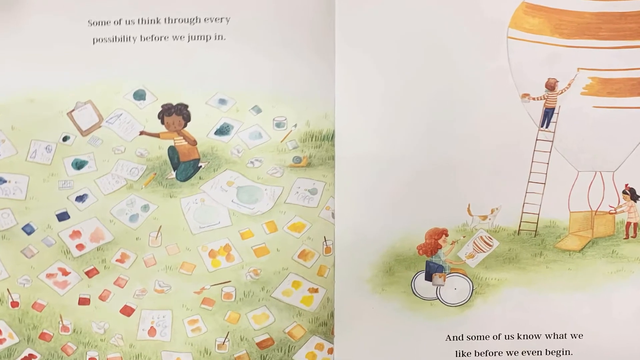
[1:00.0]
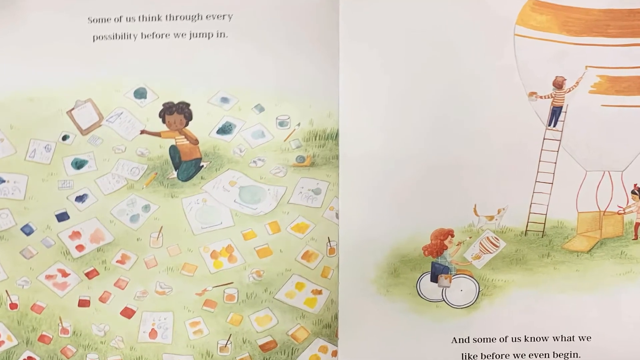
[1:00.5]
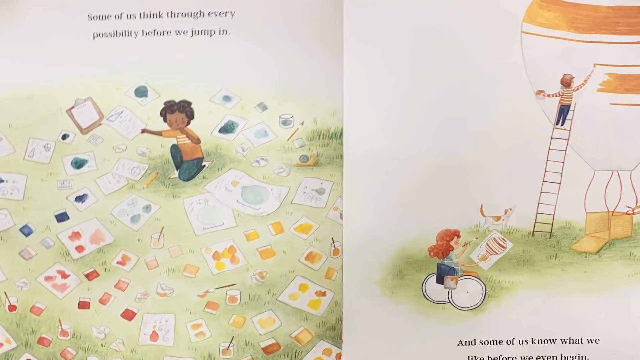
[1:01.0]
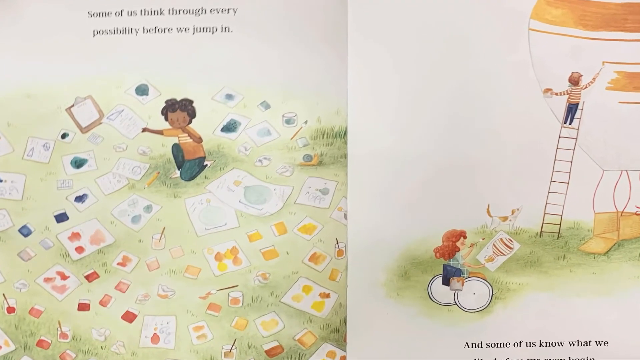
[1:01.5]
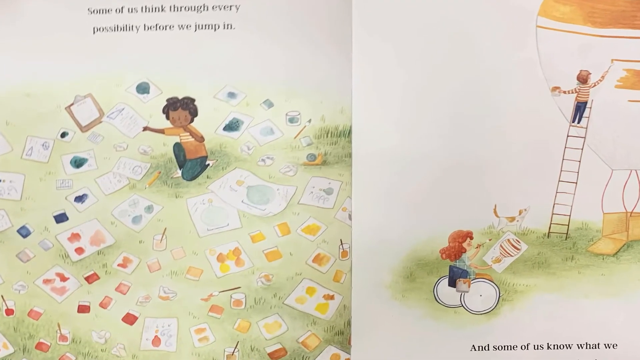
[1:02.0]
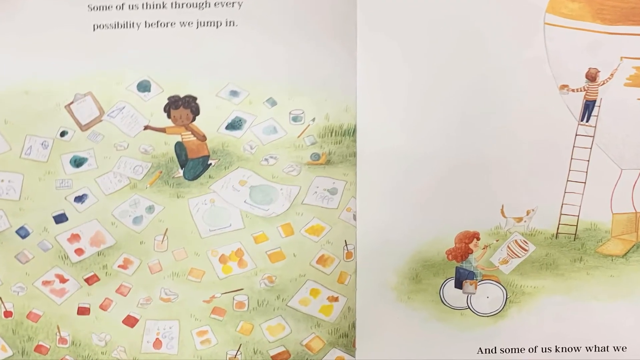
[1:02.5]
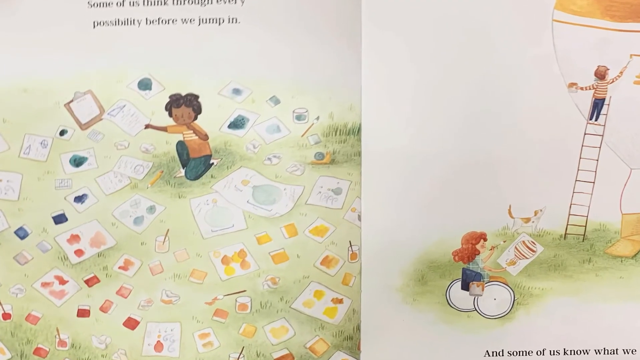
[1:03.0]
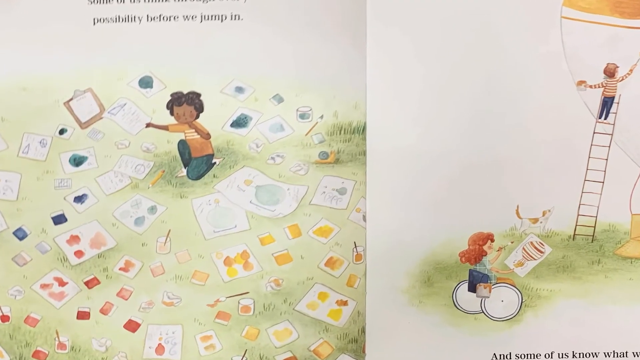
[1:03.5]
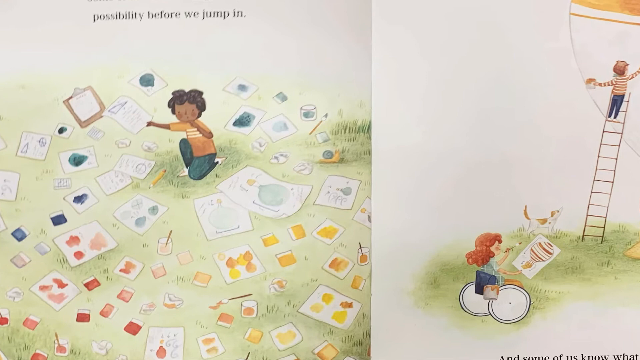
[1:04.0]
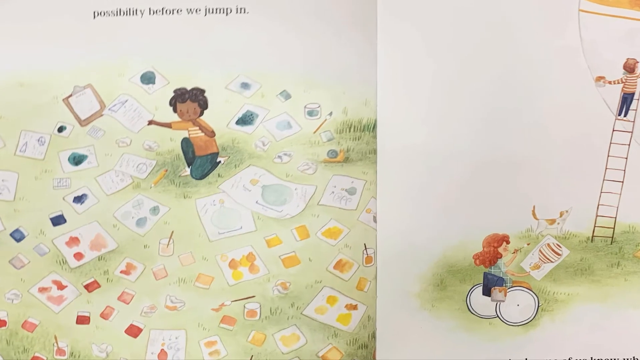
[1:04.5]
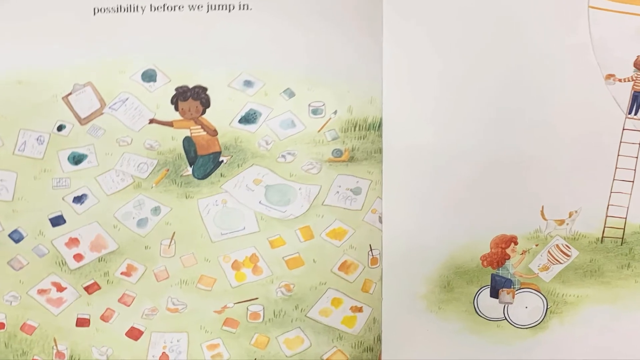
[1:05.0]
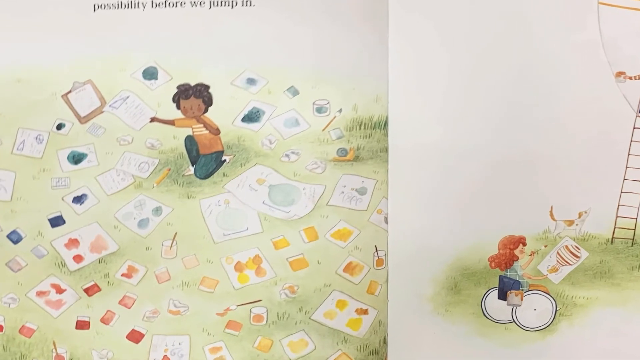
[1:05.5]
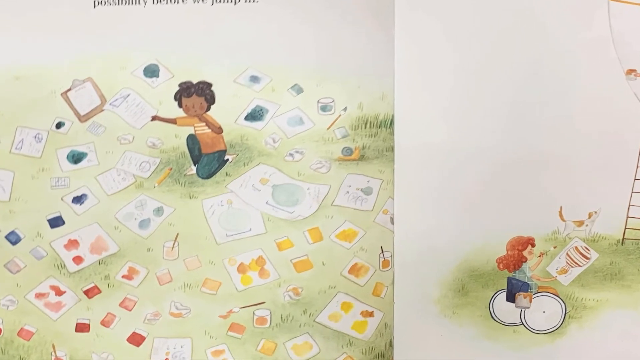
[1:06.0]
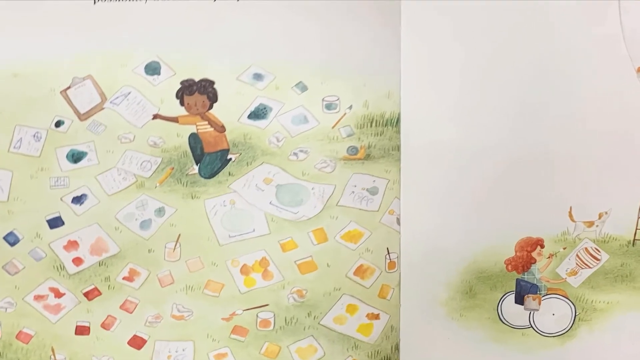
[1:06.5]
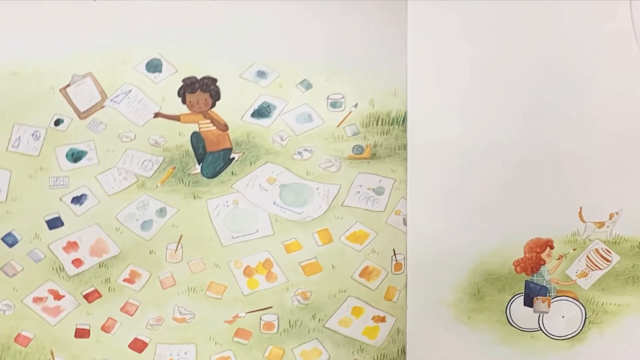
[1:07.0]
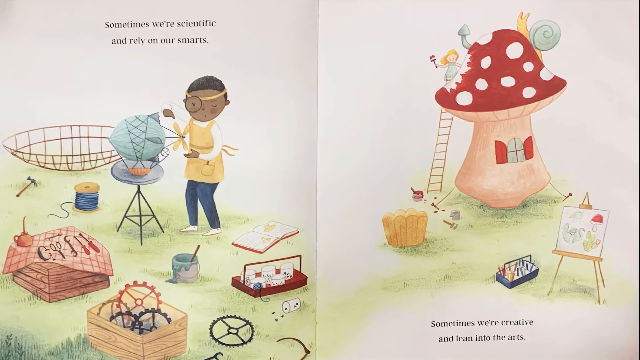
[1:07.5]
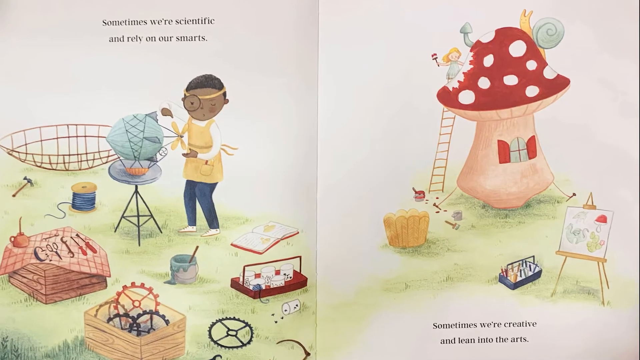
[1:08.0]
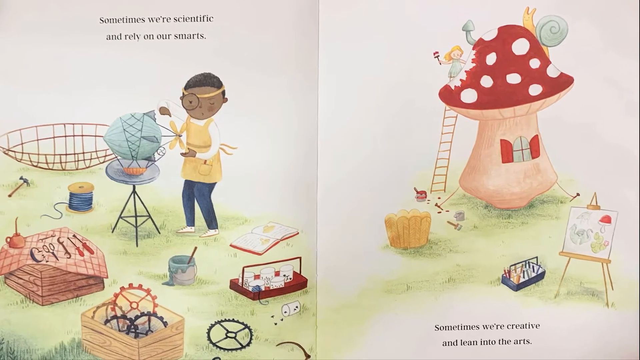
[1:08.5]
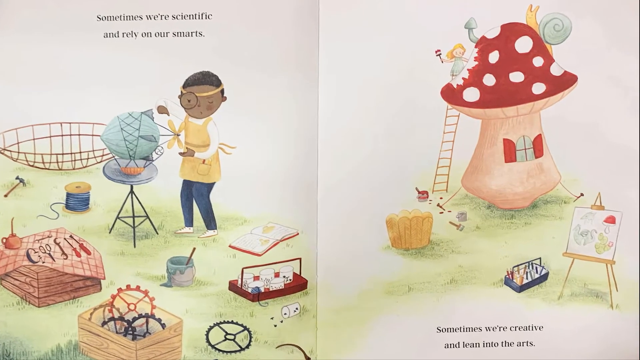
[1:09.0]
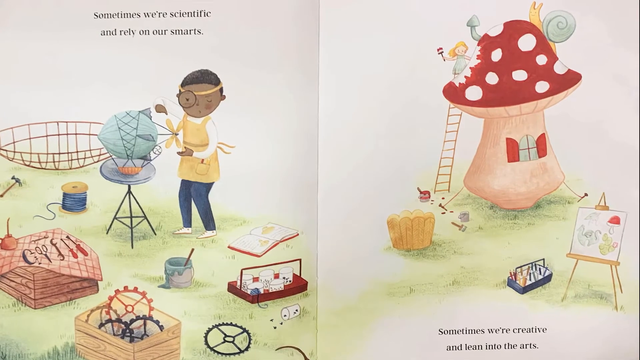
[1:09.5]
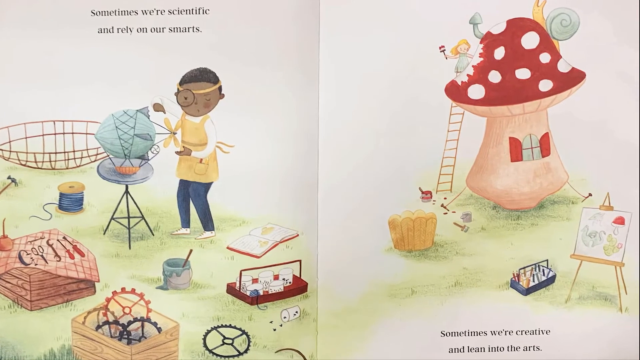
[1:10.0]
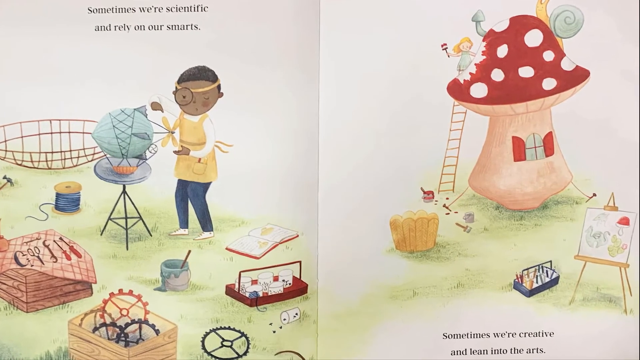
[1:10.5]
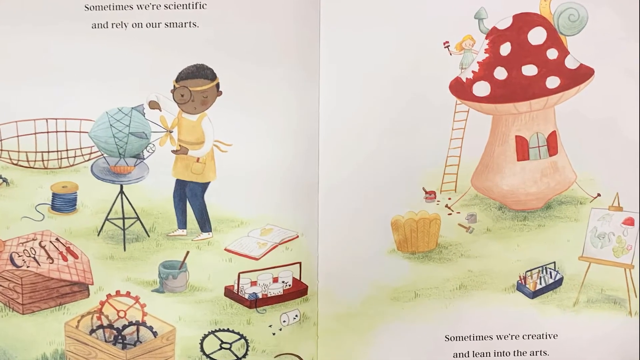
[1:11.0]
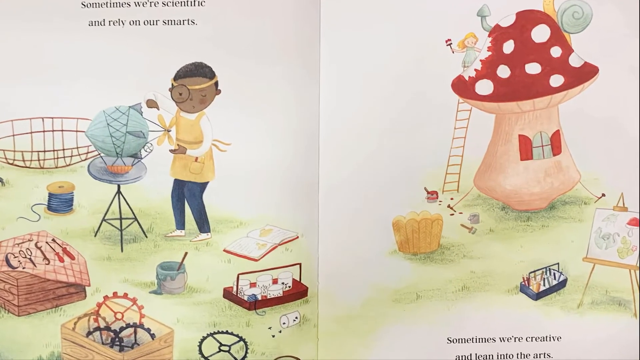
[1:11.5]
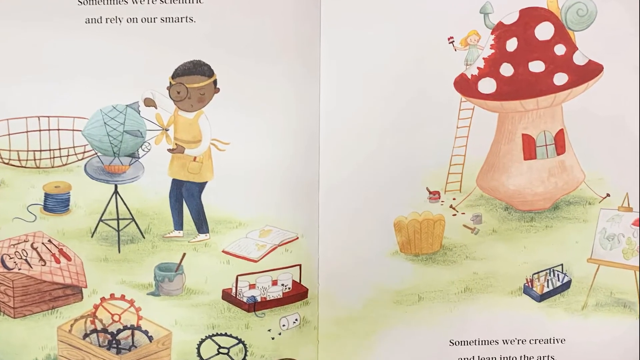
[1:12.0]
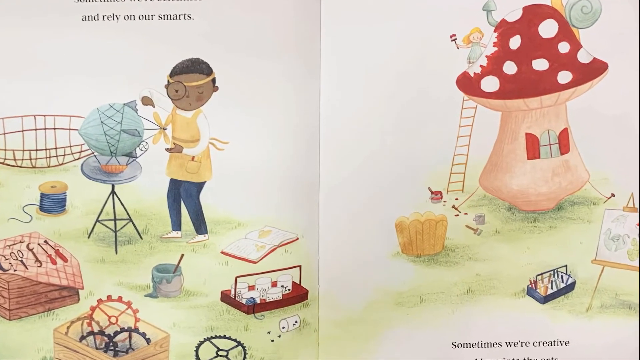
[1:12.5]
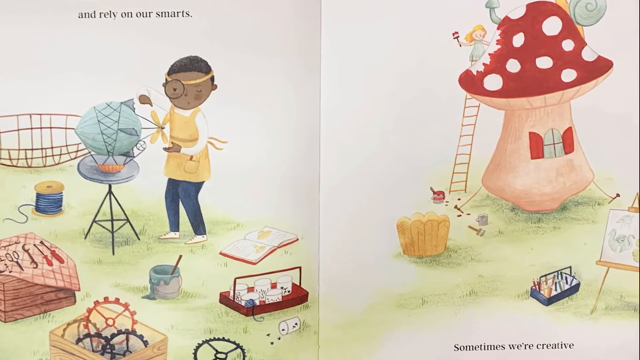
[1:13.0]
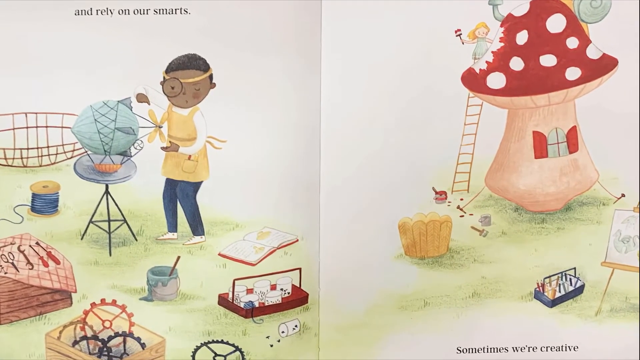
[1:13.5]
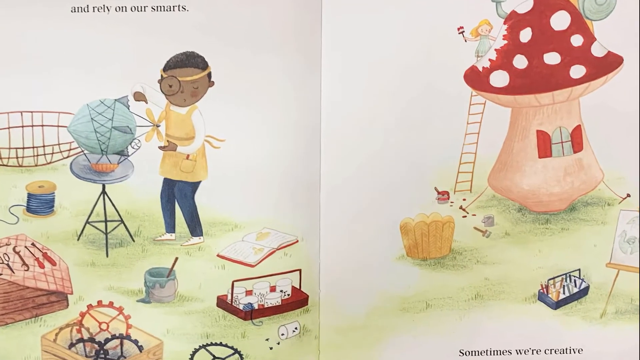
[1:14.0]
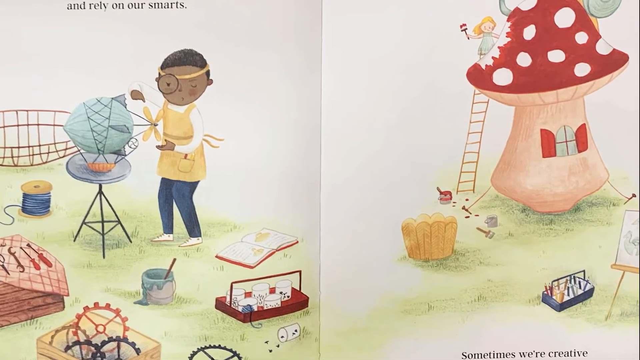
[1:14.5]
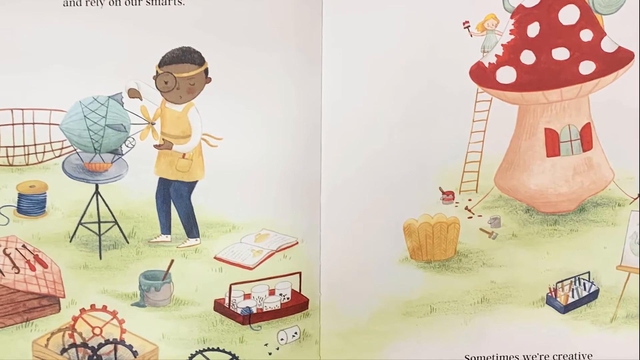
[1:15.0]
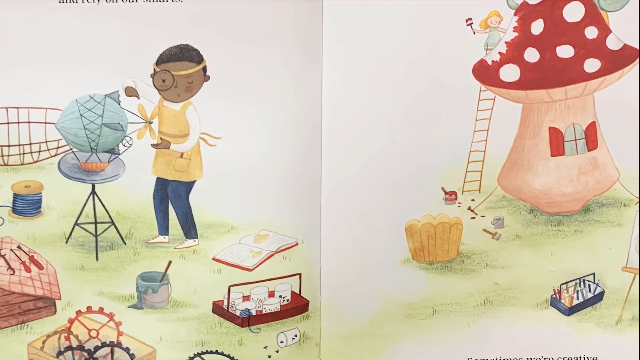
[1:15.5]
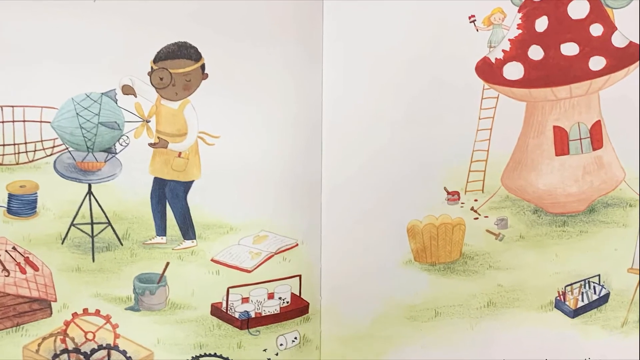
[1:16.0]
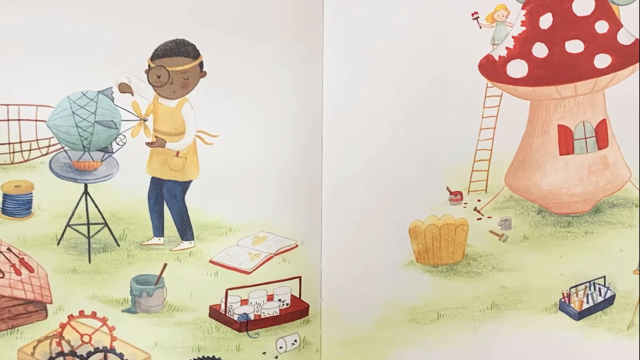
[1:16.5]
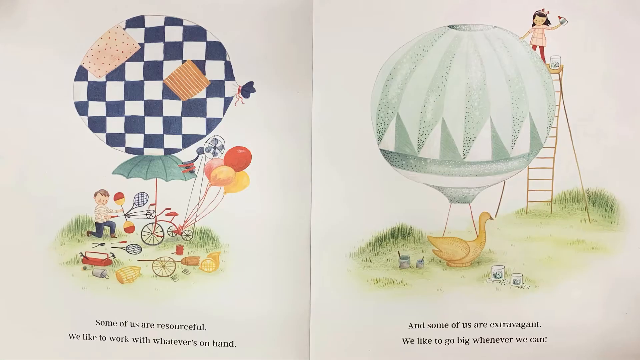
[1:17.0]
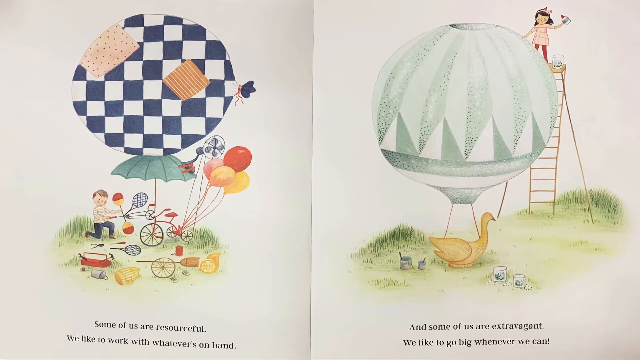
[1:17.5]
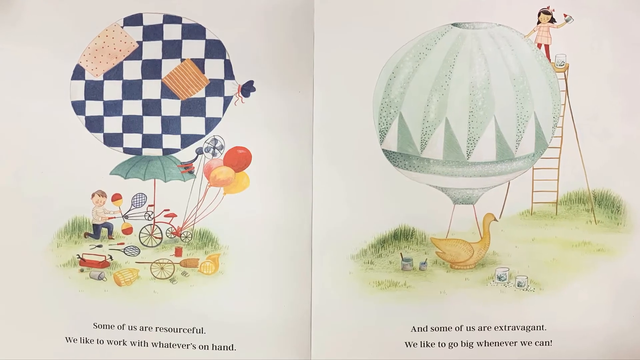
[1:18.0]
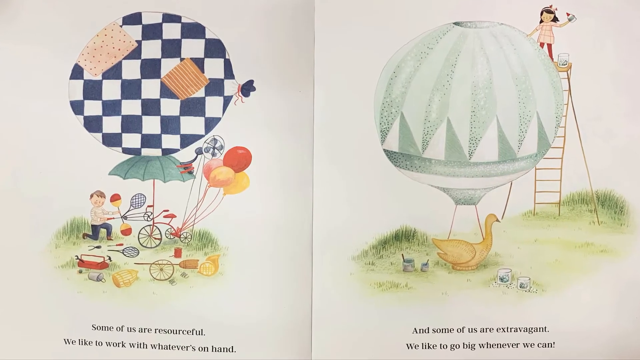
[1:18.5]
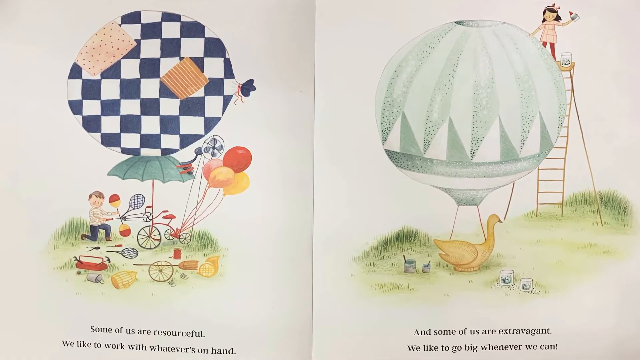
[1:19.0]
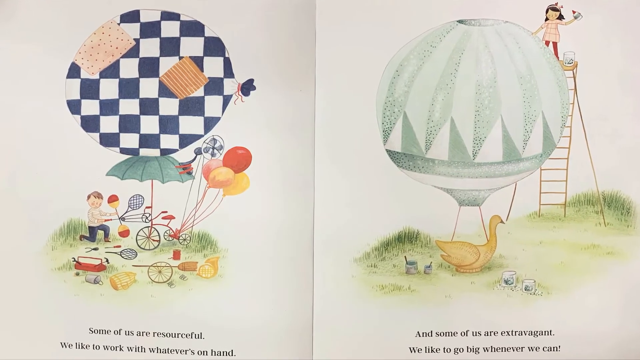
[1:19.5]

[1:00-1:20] The book is open on two facing pages. At the top of the left-hand page is written "someone must think through every possibility before we jump in". A child sits in the middle of lots of pages of sketches in different colours, some yellow, moving to red, then blue, purplish and black, thinking things through. On the right, some children work together: one in a wheelchair holds up the sketch and has a little dog, one up a ladder paints patterns onto the hot air balloon, and one at the bottom attaches the strings to the basket so that the balloon is attached to it. The view slowly pans and zooms in. The next double spread says on the left "sometimes we're scientific and rely on our smarts" and shows a very intelligent-looking boy wearing an apron, working with some wiring or thread to make the basket; it all looks very technical. On the right is a more fairy-like, fancy-looking hot air balloon shaped like a mushroom, with an easel holding a sketch, some materials in a little basket, and the basket ready to be attached. The next page shows two hot air balloons: one has a checkerboard pattern on top of an umbrella, and the one on the right has a swan or bird at the bottom with the balloon above it, while a child up a ladder sort of puts some finishing touches onto it.